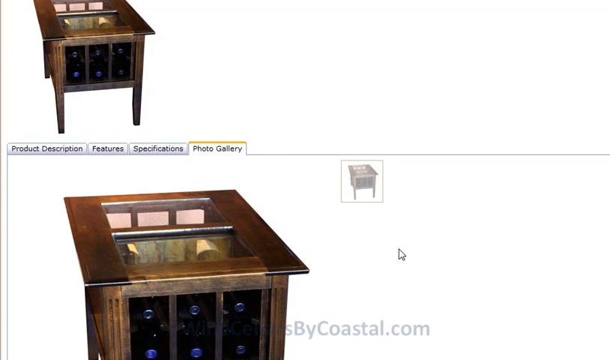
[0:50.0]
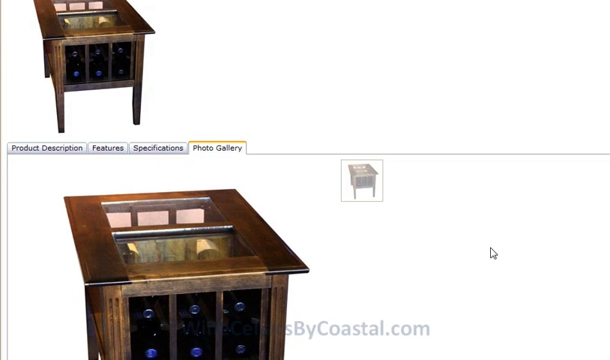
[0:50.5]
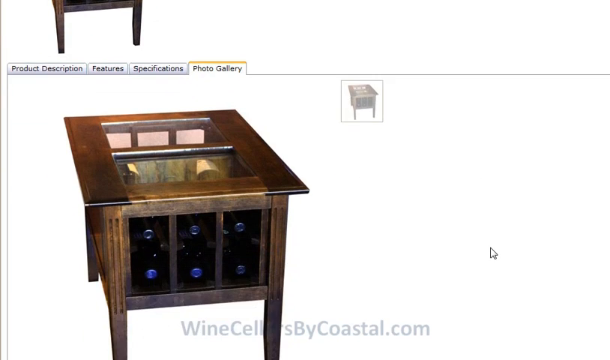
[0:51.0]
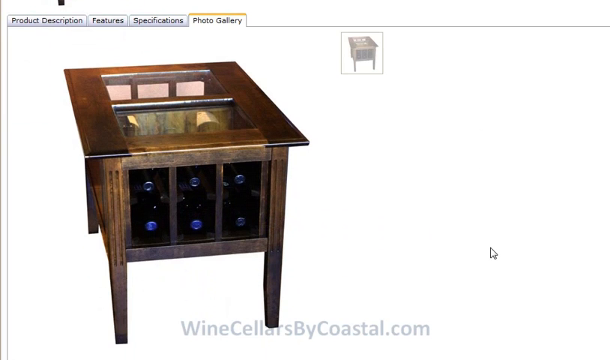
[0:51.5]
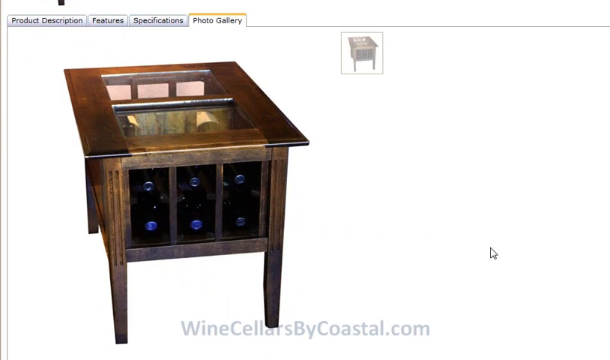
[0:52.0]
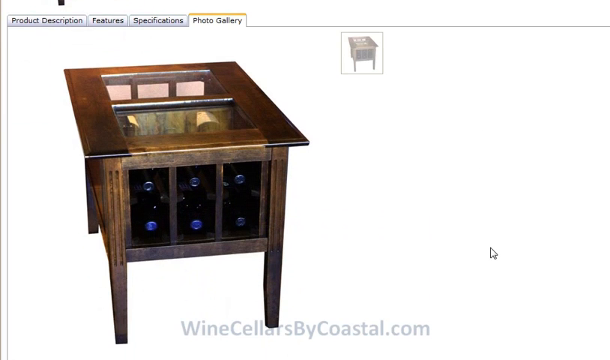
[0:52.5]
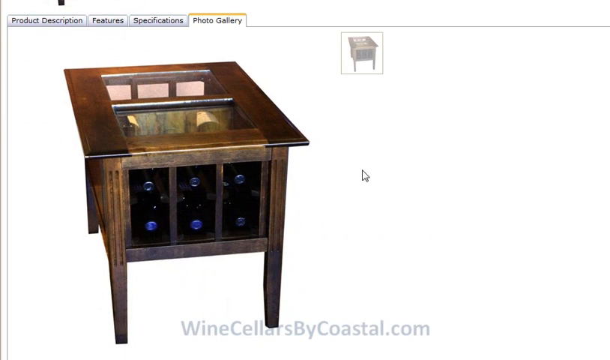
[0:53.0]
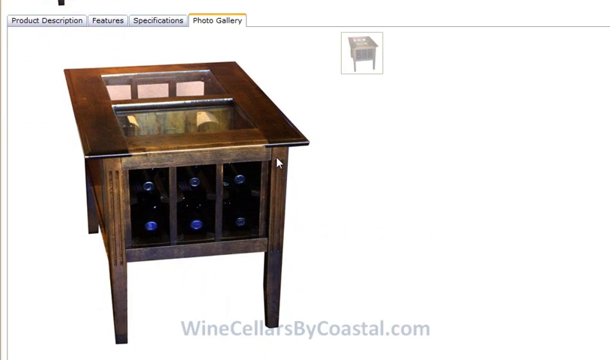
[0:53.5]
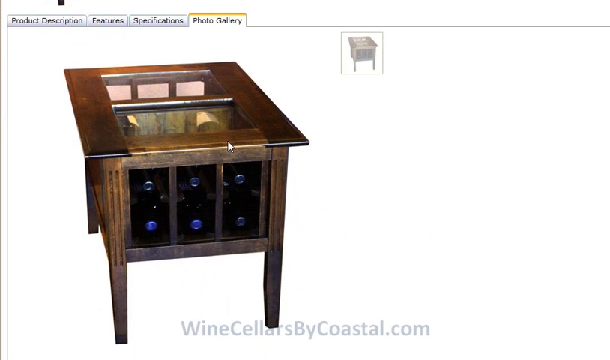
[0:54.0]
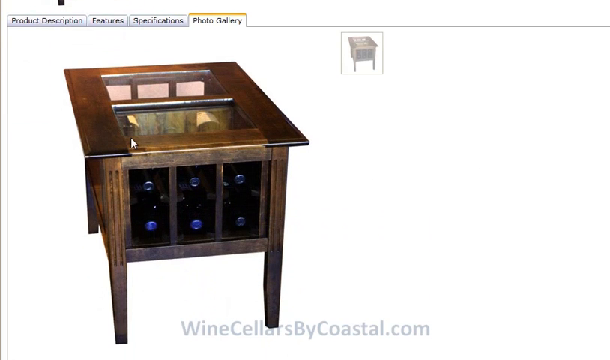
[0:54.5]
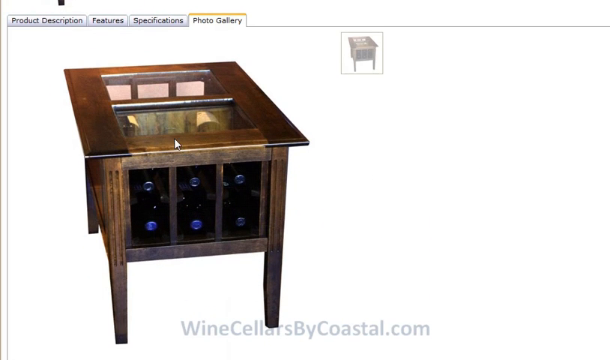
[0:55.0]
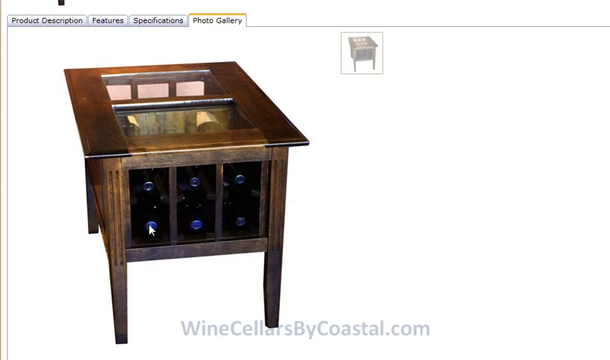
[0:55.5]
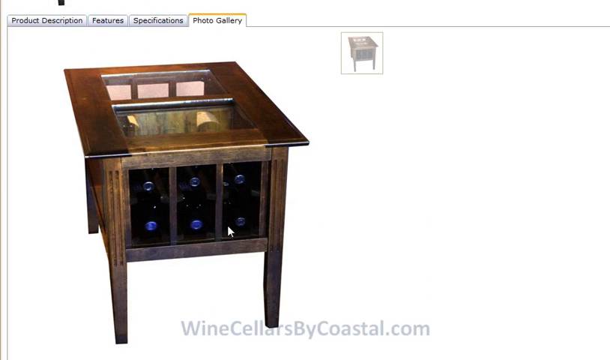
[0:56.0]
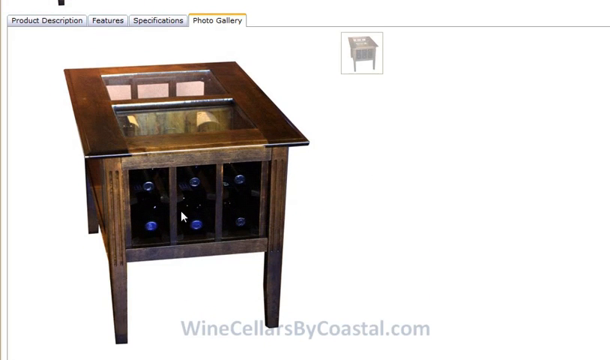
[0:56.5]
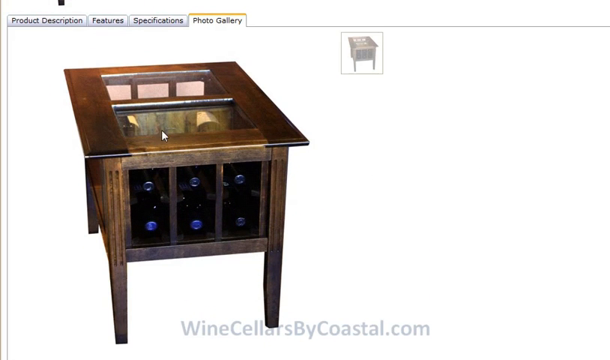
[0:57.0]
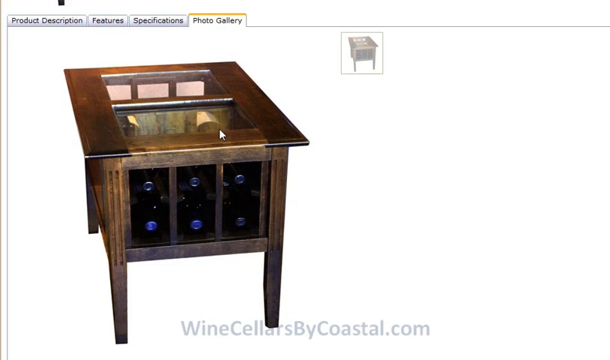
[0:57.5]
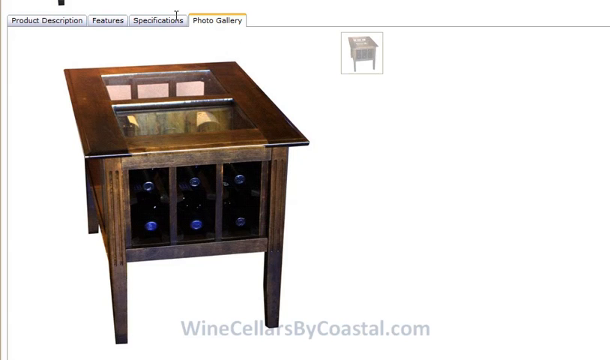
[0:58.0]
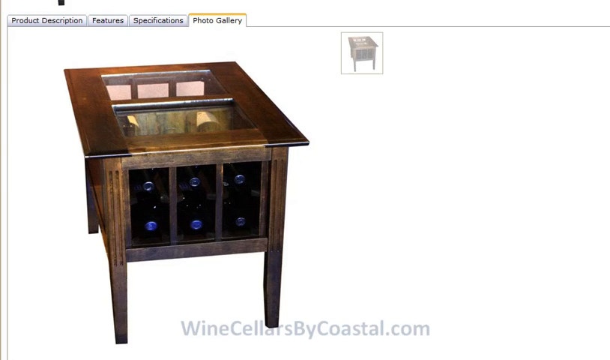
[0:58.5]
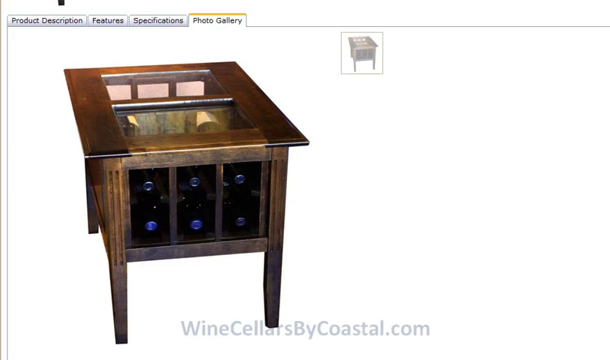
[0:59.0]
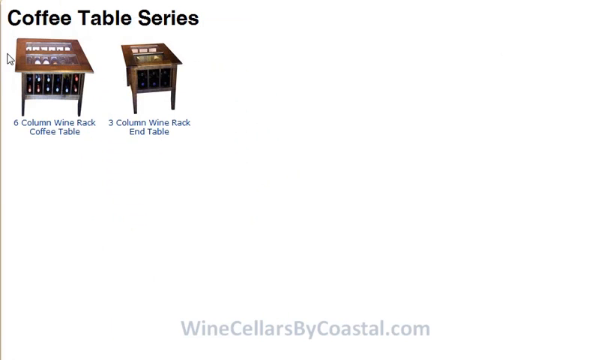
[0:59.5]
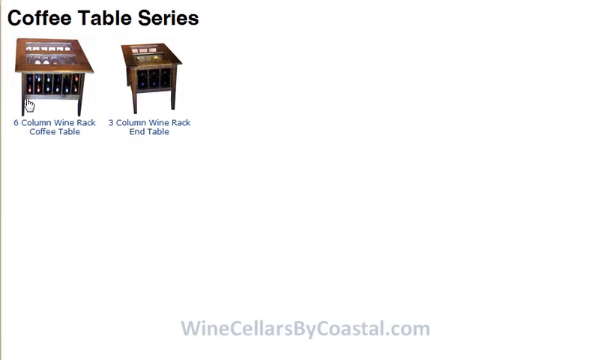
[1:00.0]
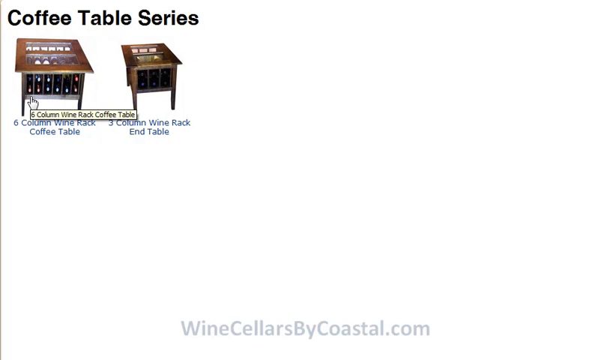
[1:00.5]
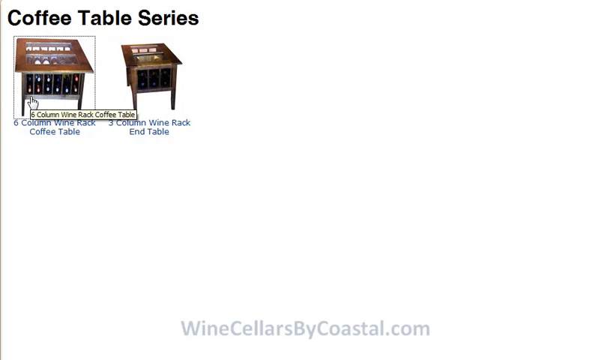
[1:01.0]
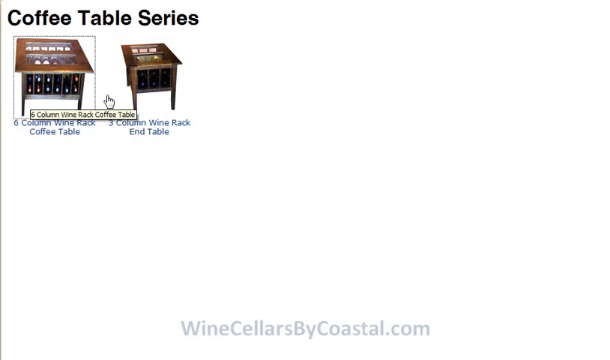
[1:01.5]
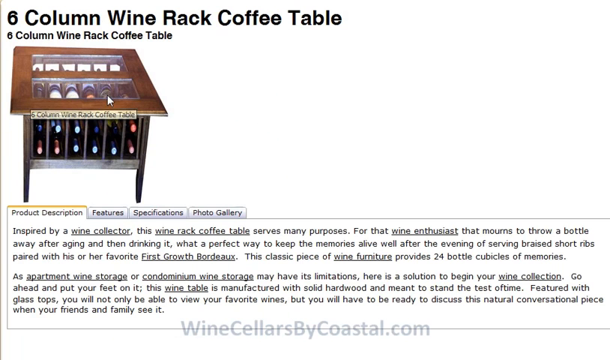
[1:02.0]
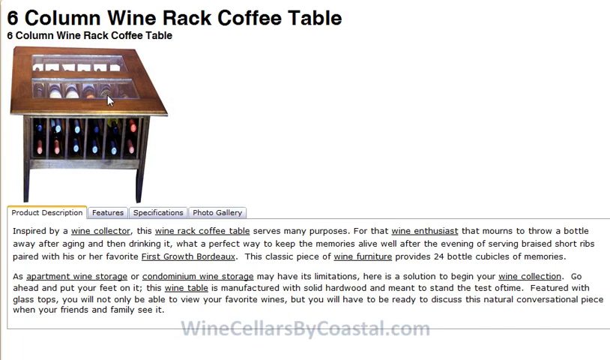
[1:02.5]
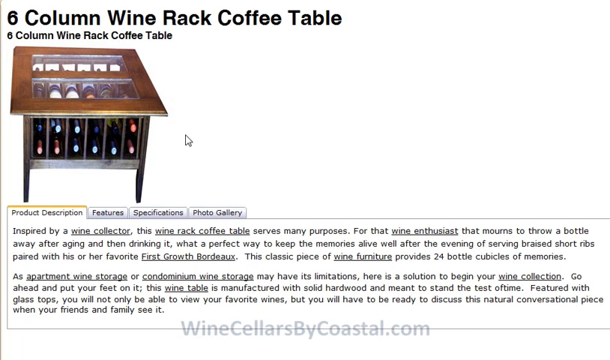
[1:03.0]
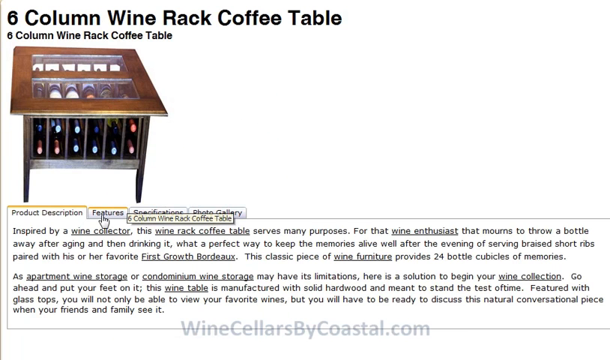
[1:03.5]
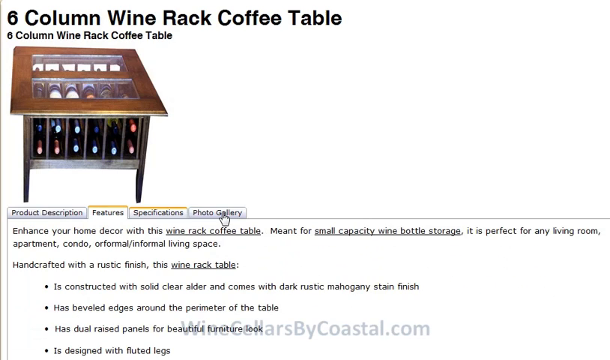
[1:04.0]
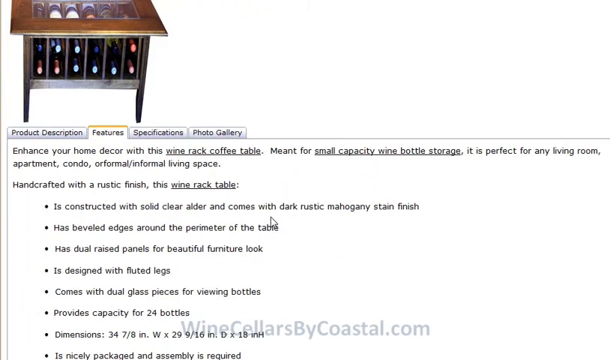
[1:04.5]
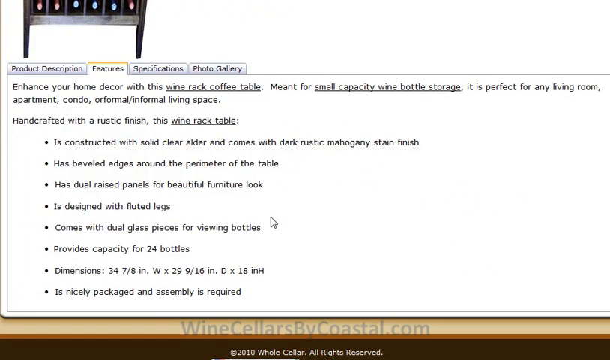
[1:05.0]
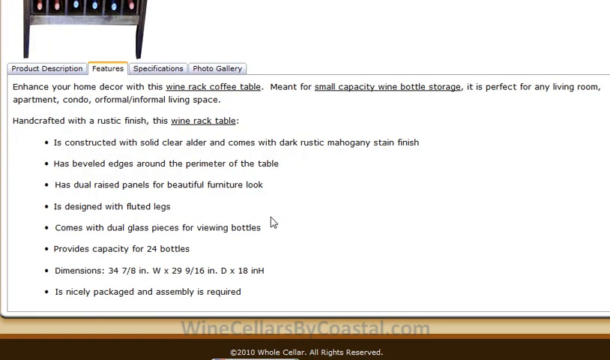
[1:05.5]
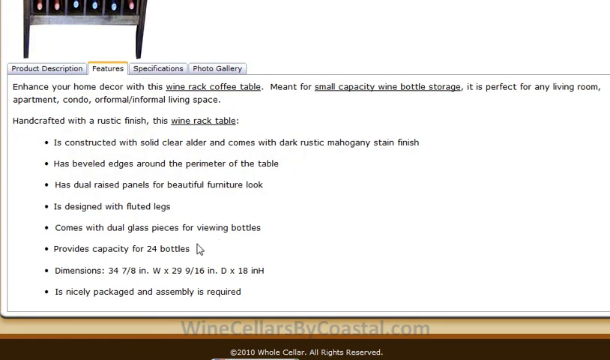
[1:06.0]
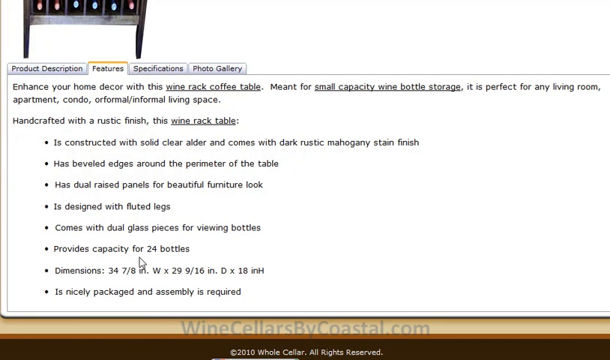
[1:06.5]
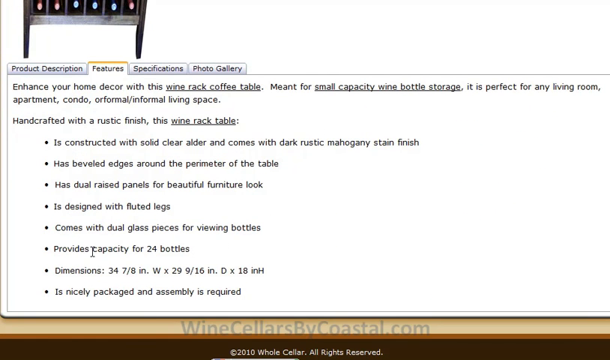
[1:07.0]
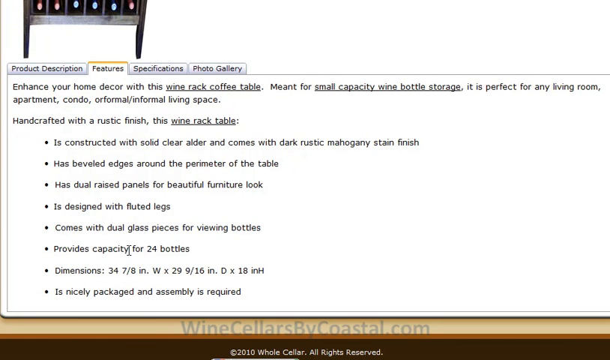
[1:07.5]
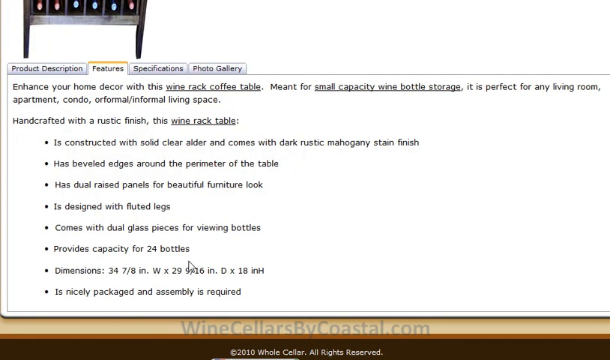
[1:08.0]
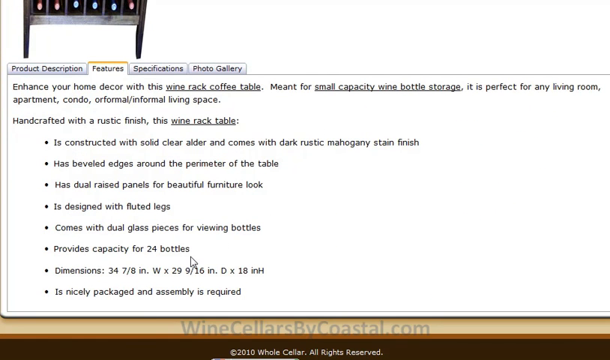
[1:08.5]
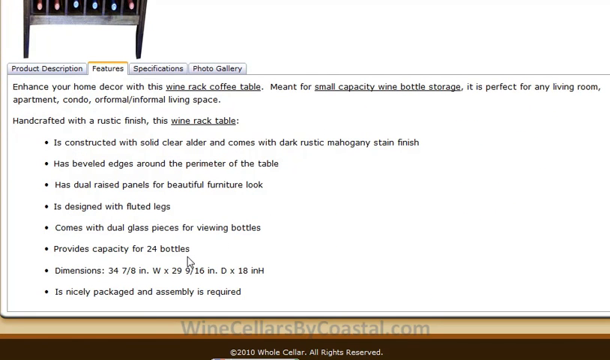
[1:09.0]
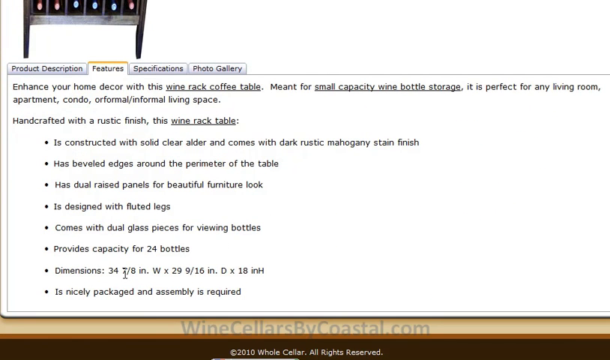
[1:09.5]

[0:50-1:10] In the photo gallery tab, a larger photo shows the rectangular dark brown wood coffee table with two cutout panels on top covered with glass and a three column, two row wine rack underneath holding wine bottles with blue caps. The user scrolls down the page to show the full image, and the cursor hovers over the image. The user then seems to go back to a white page with "Coffee Table Series" in large black text in the top left corner. Underneath, two coffee tables are listed with thumbnail images and product names below them: a larger coffee table of brown wood with two rectangular cutout panels on top covered with glass and a six-column wine rack, labeled "Six-Column Wine Rack Coffee Table", and to its right a similar-looking but smaller wine table with only a three-column wine rack, labeled "Three-Column Wine Rack End Table". The cursor clicks the first product, opening its product page. A black heading in the top left corner reads "6 Column Wine Rack Coffee Table", with "6 Column Wine Rack Coffee Table" repeated in smaller letters underneath. Below is the image of the larger coffee table with cutout square panels on top and the six column wine rack underneath, holding bottles of wine. The user clicks the features tab and scrolls down a little, showing a few sentences and a bulleted list about the design and features of the coffee table.